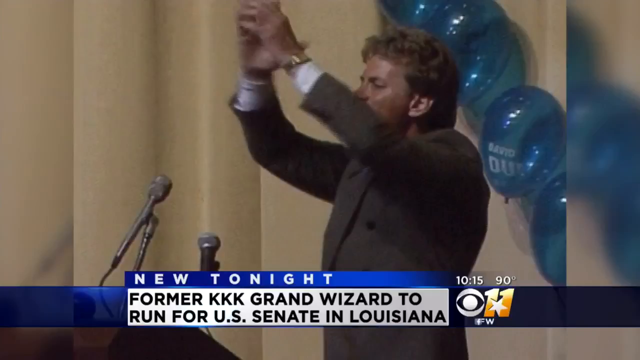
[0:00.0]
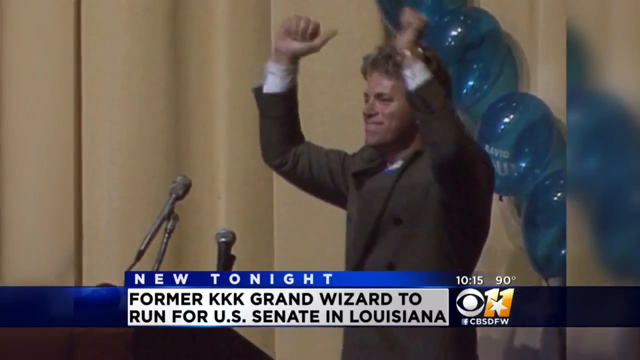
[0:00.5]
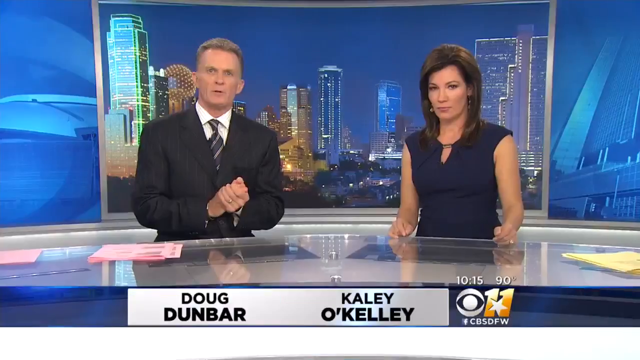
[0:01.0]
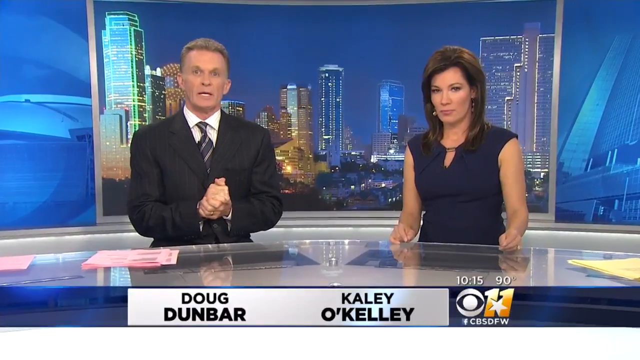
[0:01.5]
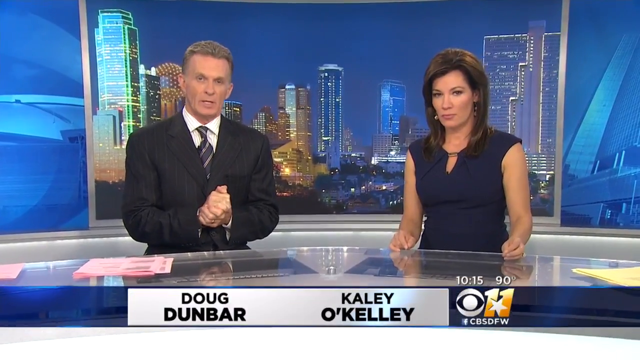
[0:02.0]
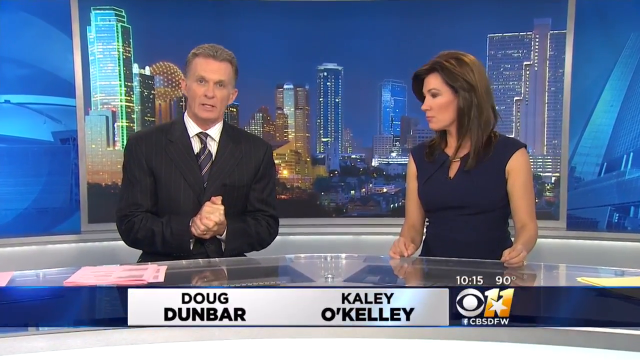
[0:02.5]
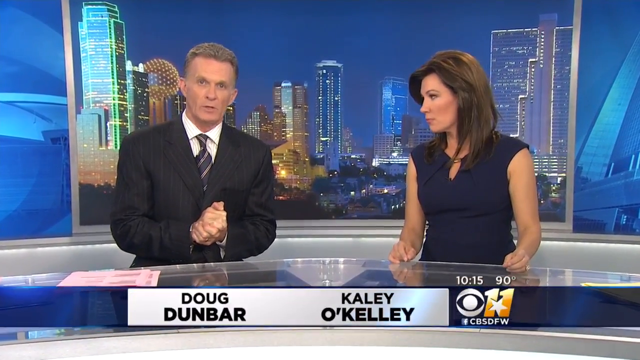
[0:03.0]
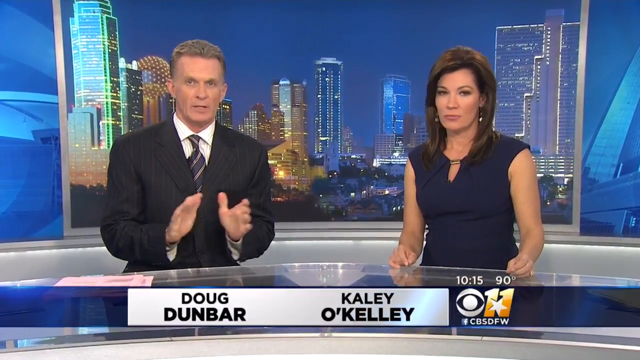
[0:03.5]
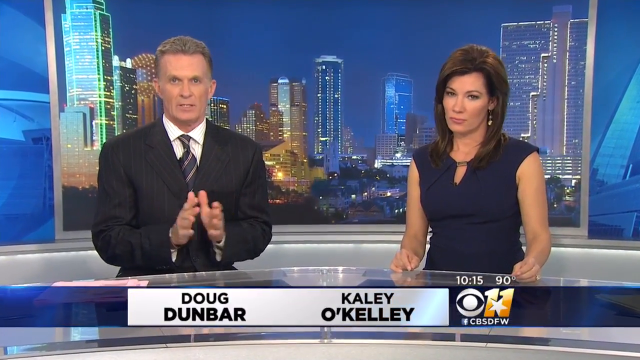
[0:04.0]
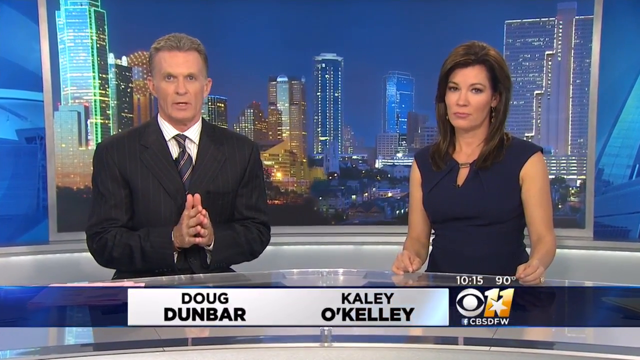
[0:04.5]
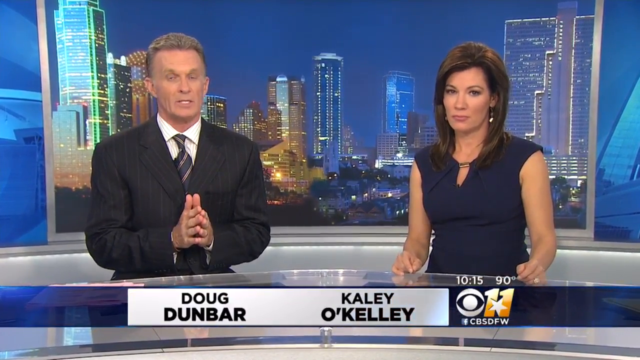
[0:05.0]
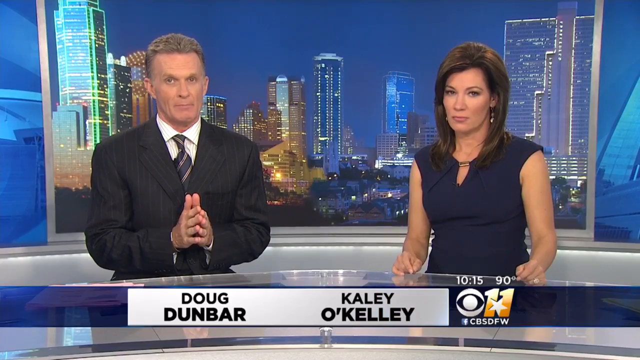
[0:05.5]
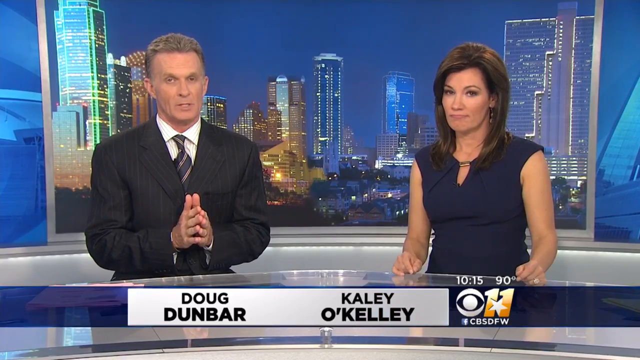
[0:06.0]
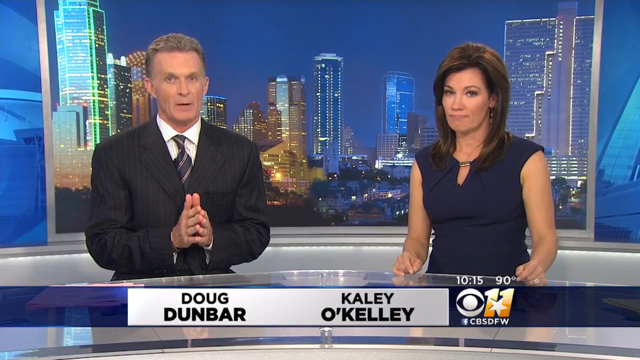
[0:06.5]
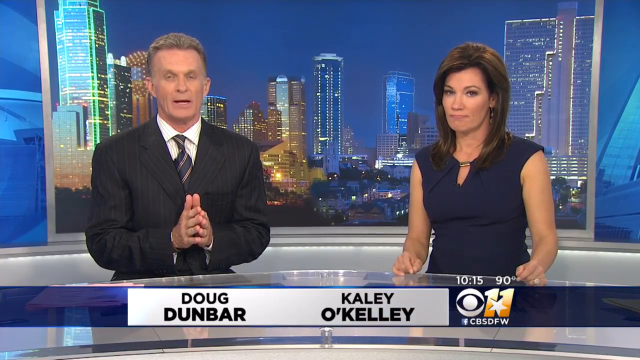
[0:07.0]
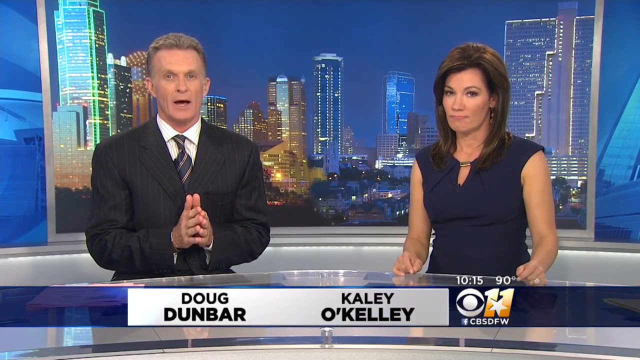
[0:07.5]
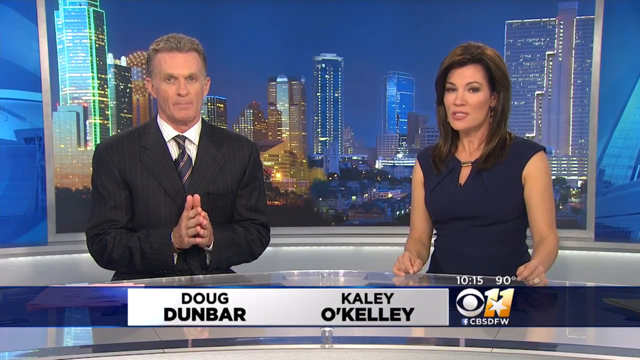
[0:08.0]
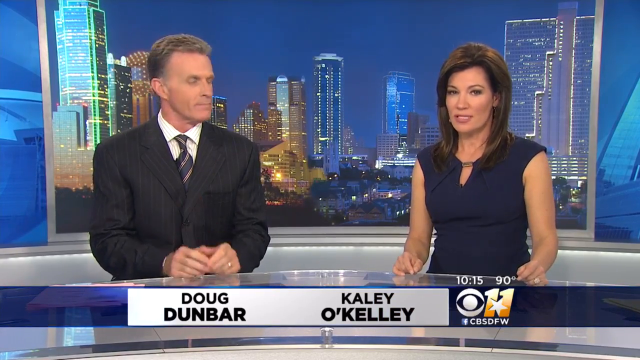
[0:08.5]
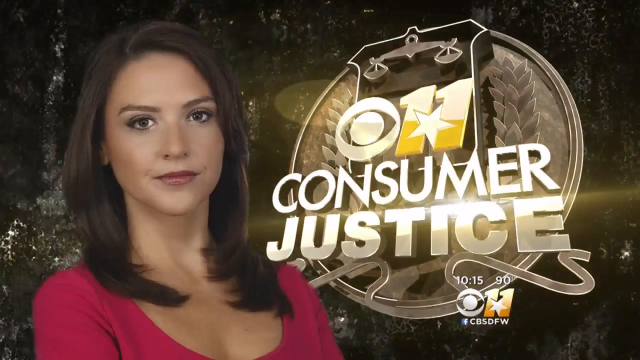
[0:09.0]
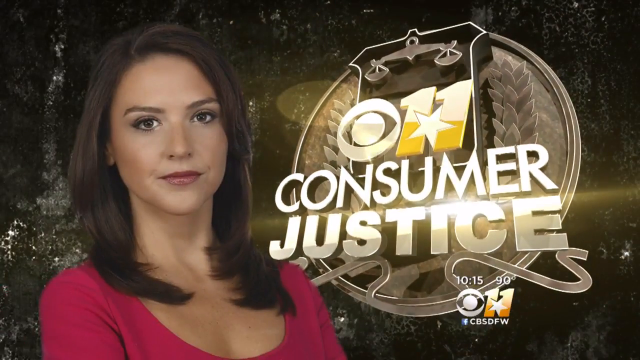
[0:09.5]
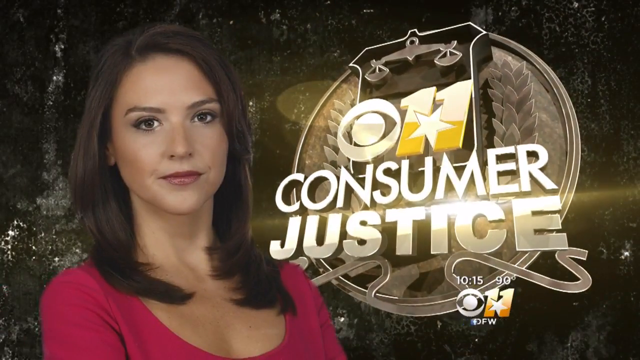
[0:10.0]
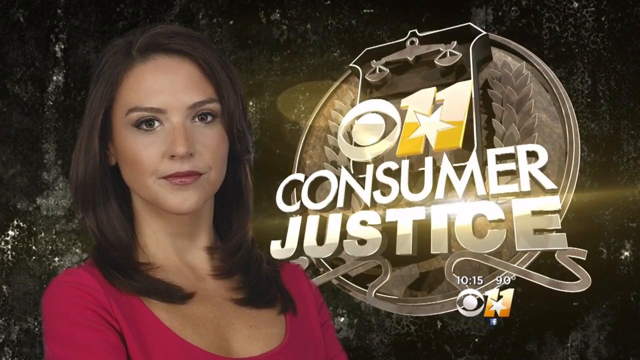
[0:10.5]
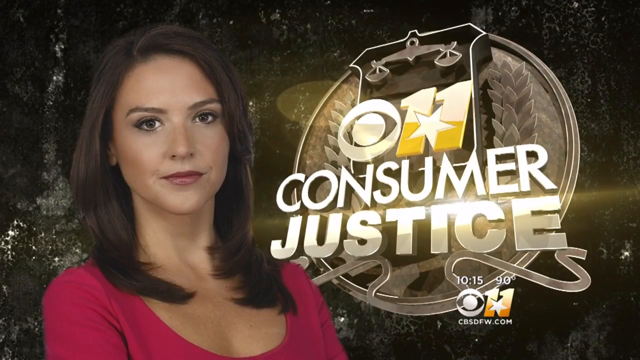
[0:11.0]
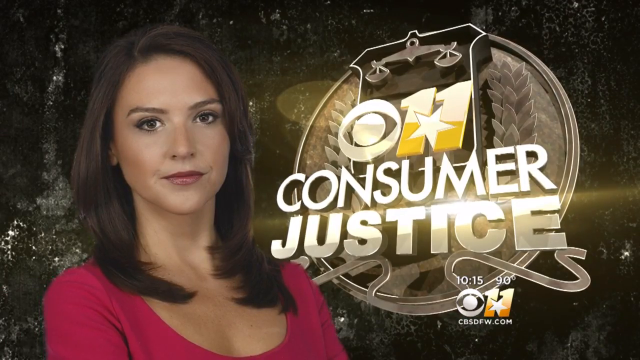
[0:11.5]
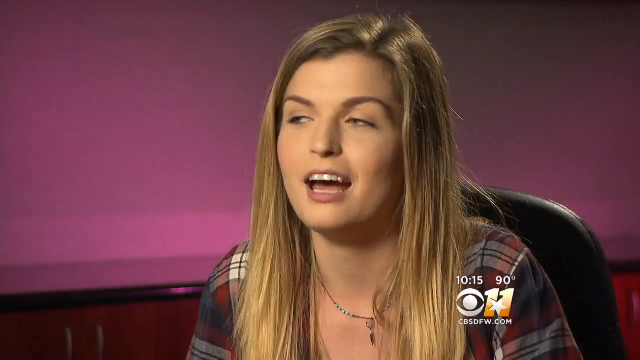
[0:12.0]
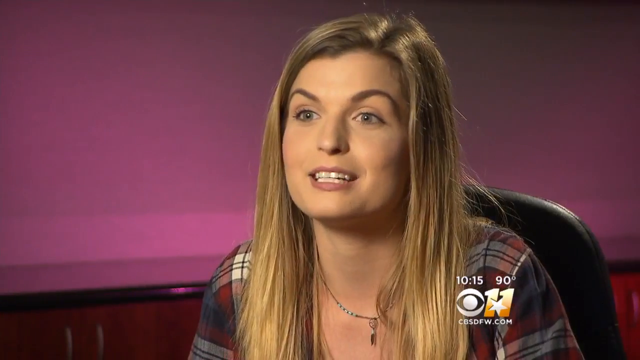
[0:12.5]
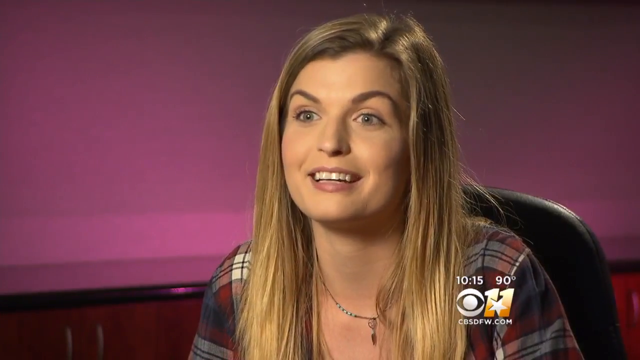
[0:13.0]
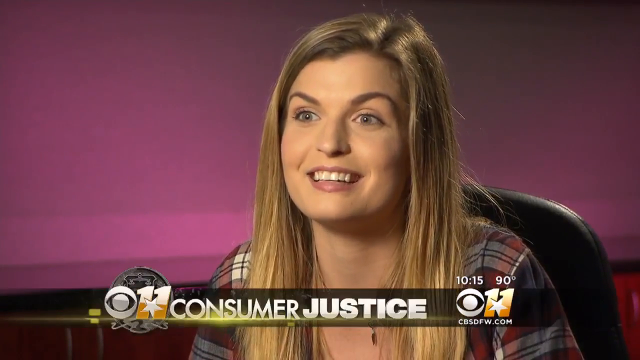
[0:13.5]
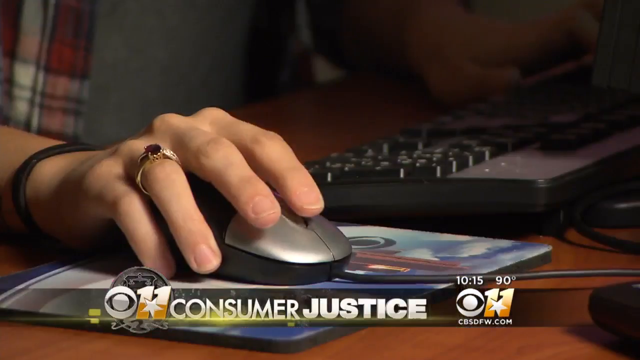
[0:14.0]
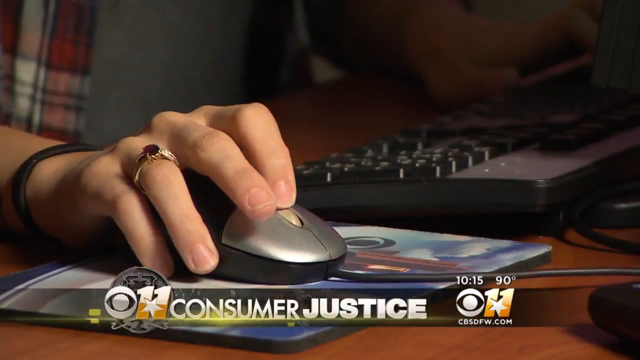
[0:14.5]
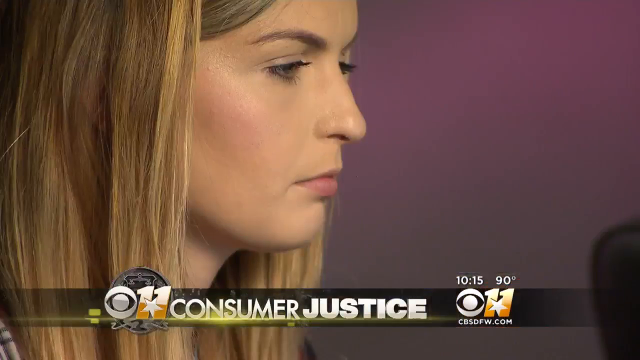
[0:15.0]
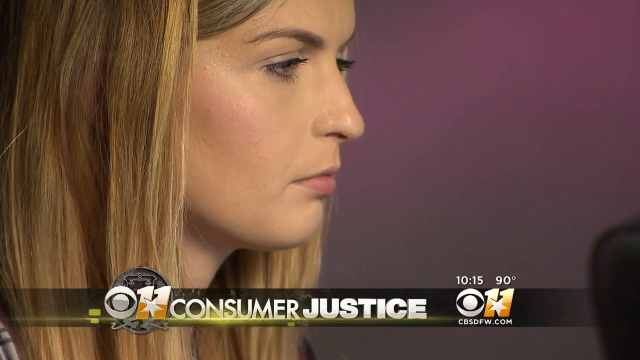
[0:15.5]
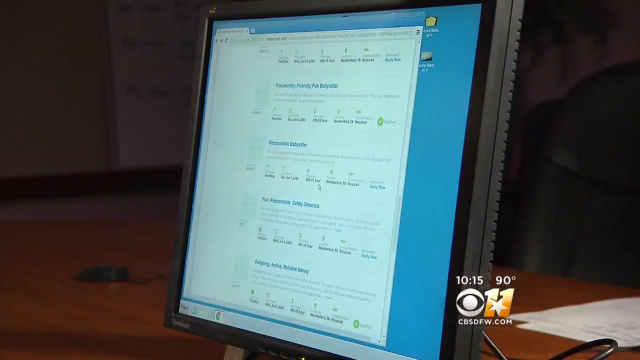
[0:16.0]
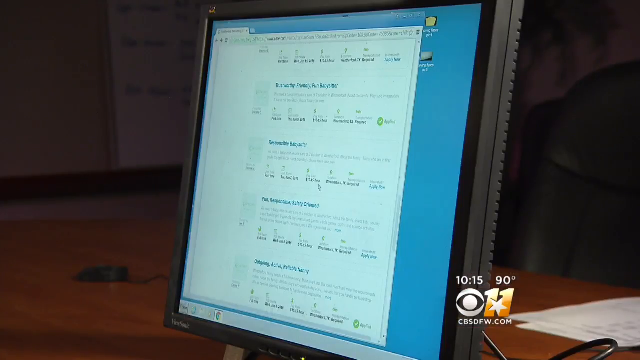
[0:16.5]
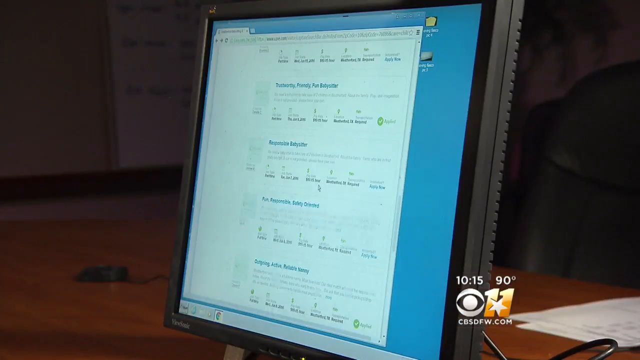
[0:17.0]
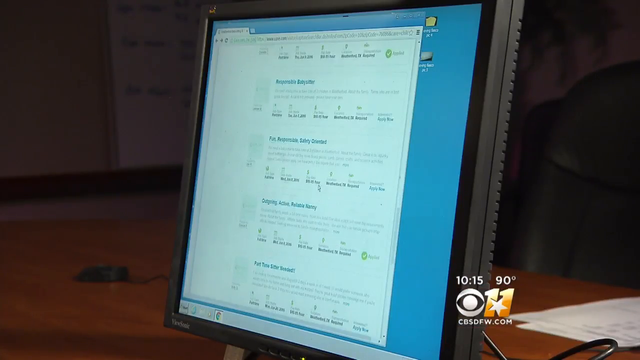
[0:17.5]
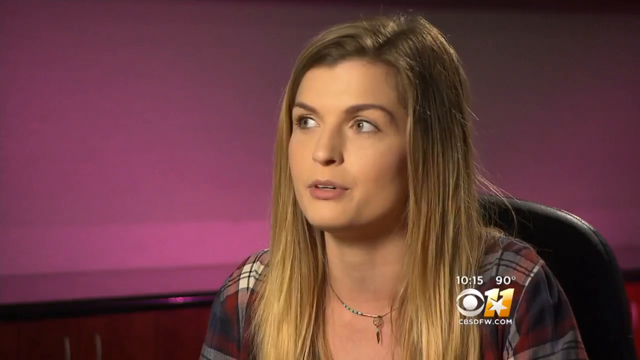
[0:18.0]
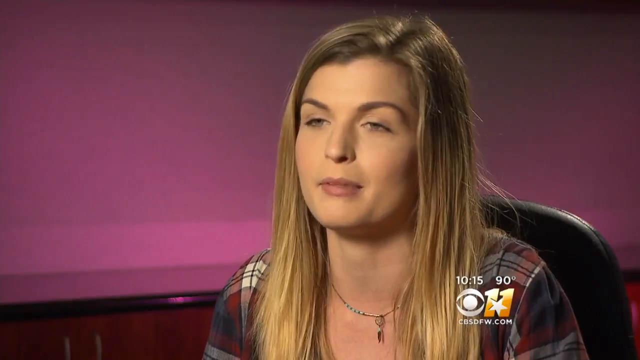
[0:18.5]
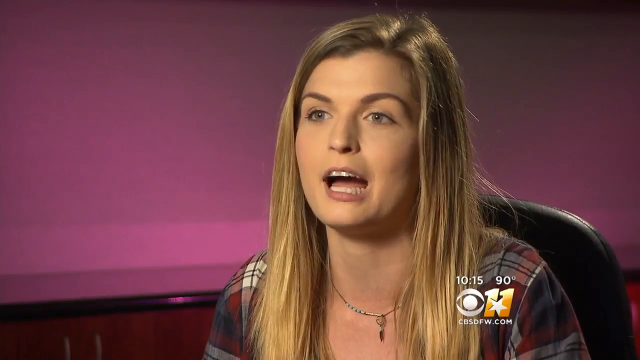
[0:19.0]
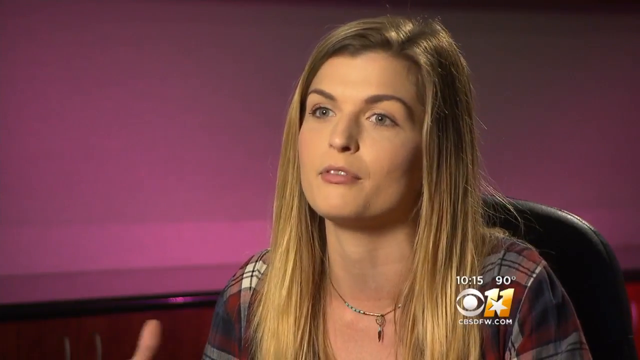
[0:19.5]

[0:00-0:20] A CBS News-style video shows a kind of young Caucasian individual with fairly black hair, with text that says "New Tonight, former KKK Grand Wizard to run for the U.S. Senate in Louisiana." The screen transitions to two individuals who appear to be news anchors: Doug, who is kind of Caucasian and wears a black shirt over a sort of white undershirt, and Kaylee O'Kelley. Another screen shows a kind of Caucasian female with brown hair and a pink shirt, probably around 25 to 30 years old, with text reading "consumer justice." The scene then transitions to a 34-year-old female with kind of medium-length hair shown in front of a computer screen as part of the consumer justice portion of the news segment.